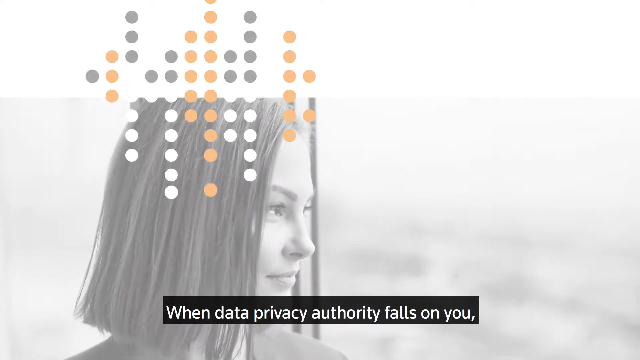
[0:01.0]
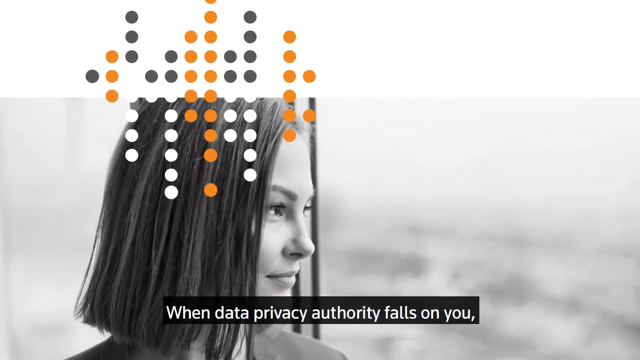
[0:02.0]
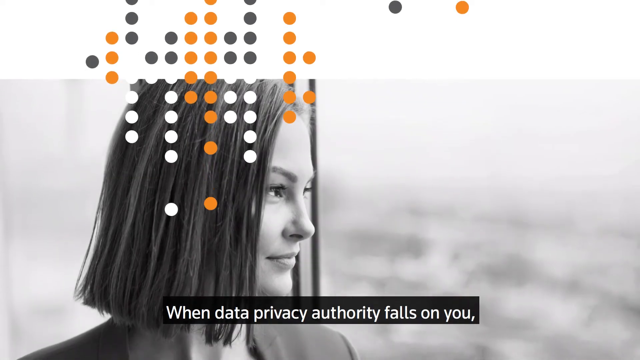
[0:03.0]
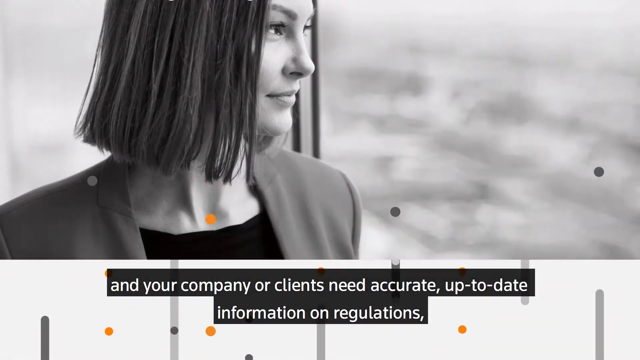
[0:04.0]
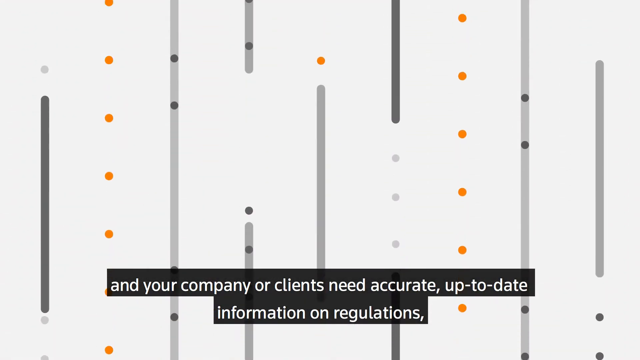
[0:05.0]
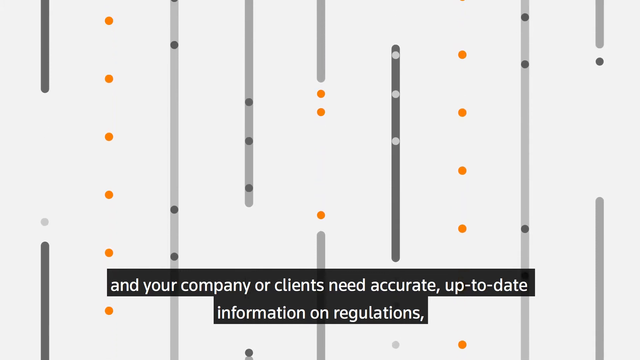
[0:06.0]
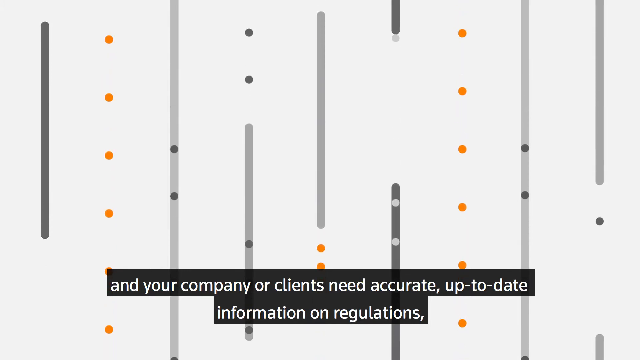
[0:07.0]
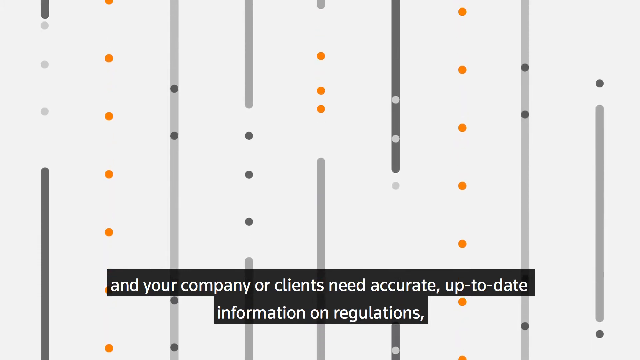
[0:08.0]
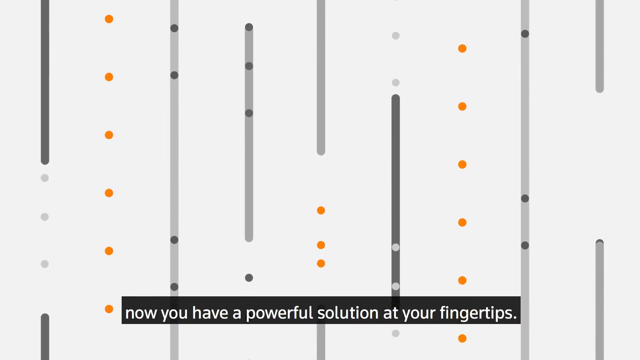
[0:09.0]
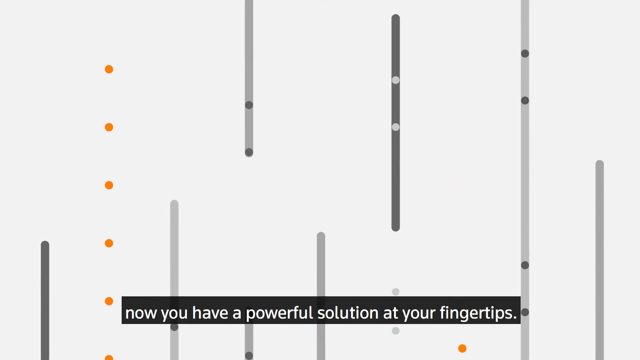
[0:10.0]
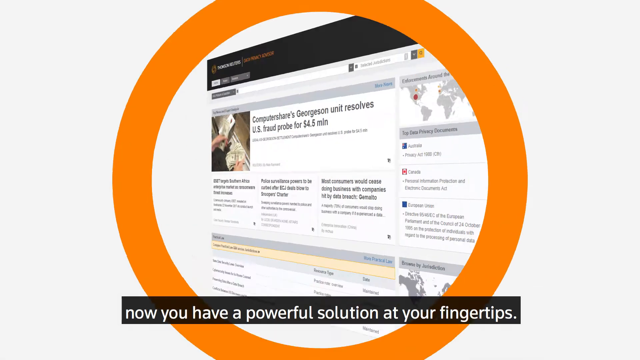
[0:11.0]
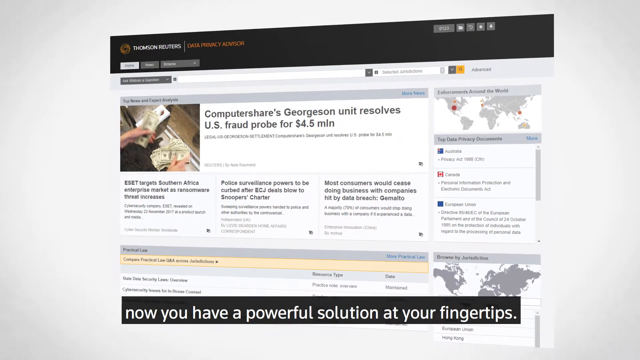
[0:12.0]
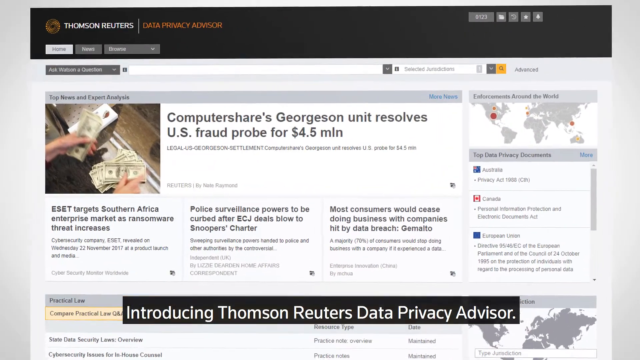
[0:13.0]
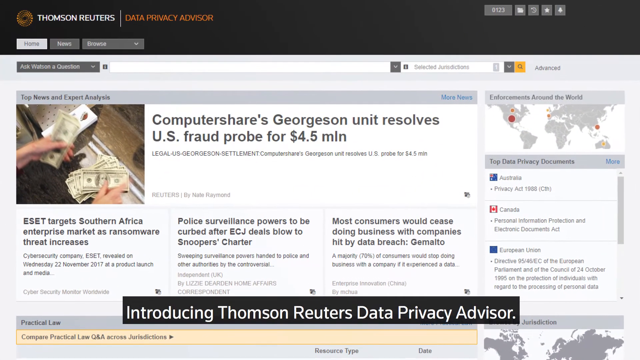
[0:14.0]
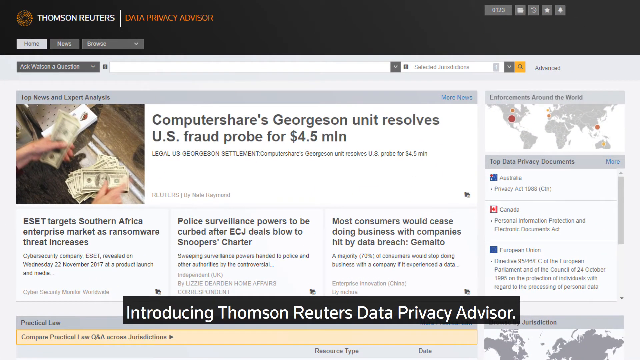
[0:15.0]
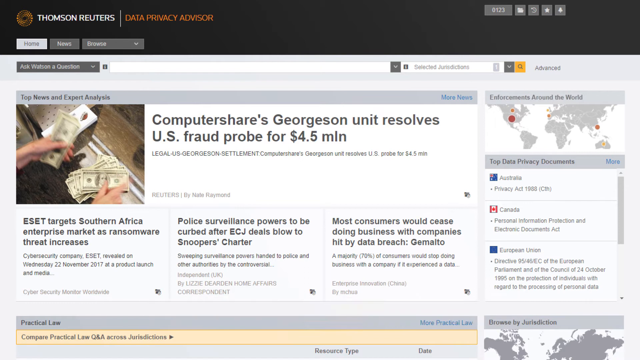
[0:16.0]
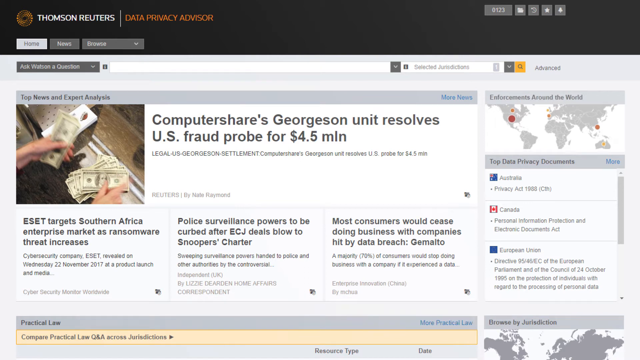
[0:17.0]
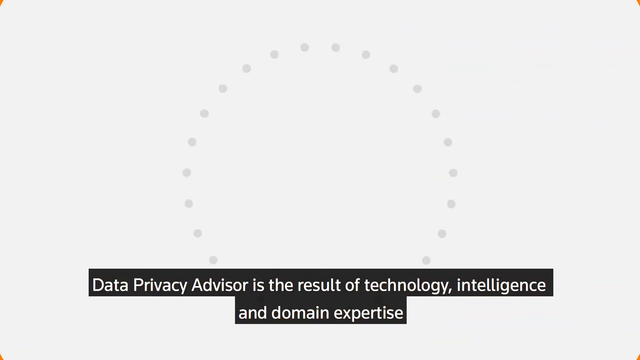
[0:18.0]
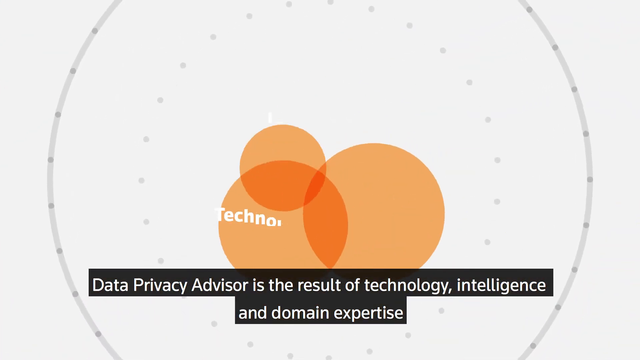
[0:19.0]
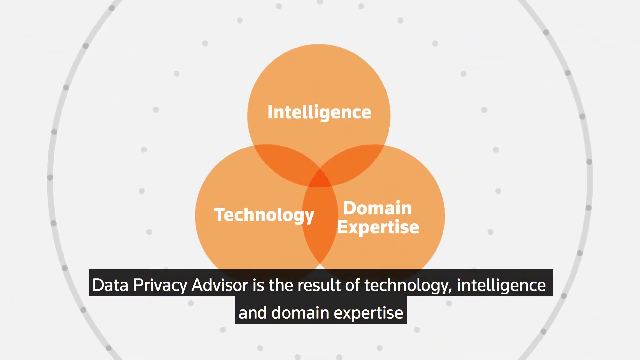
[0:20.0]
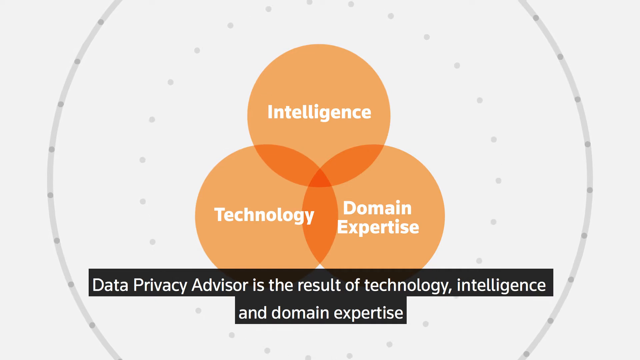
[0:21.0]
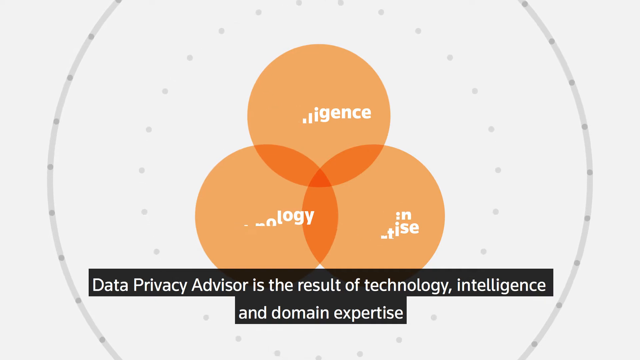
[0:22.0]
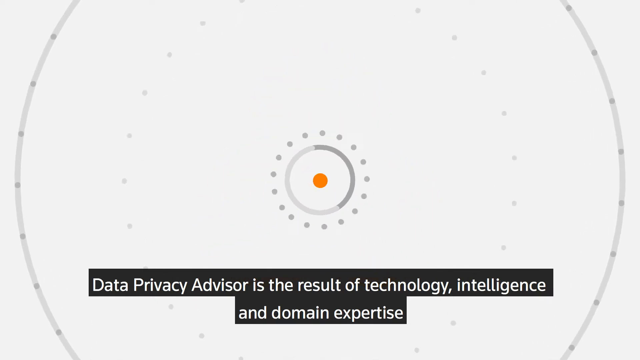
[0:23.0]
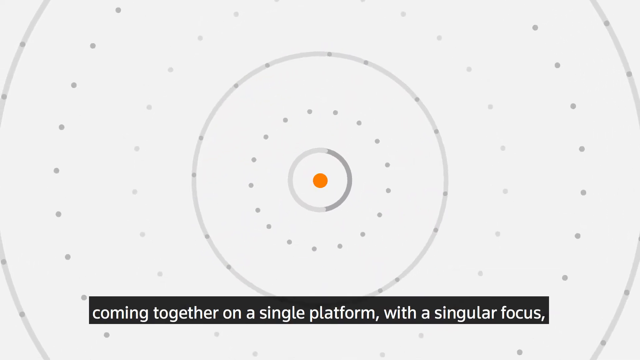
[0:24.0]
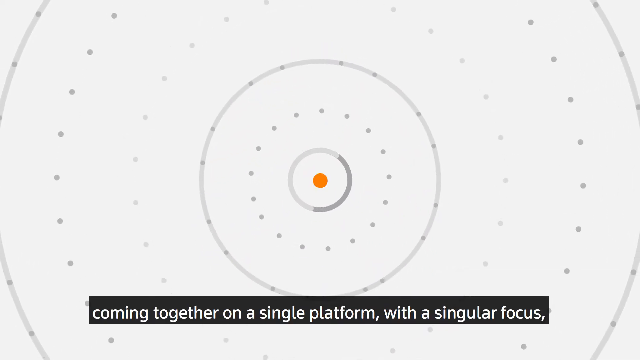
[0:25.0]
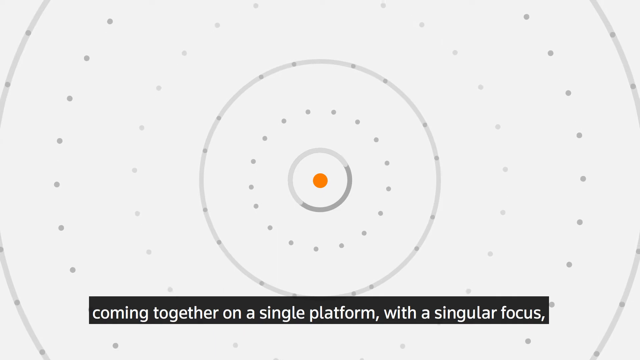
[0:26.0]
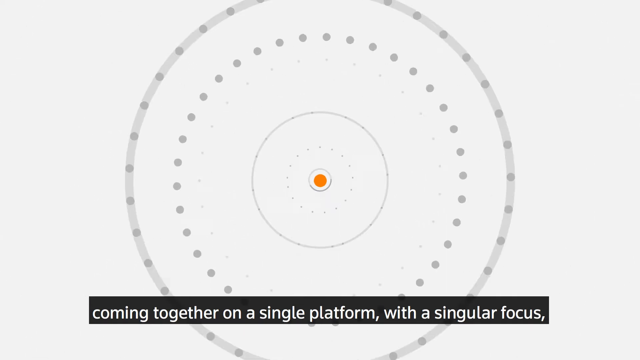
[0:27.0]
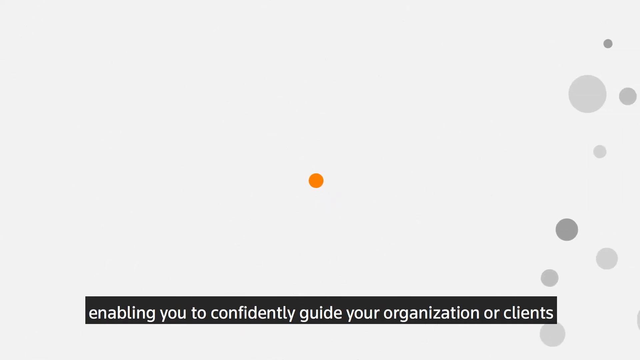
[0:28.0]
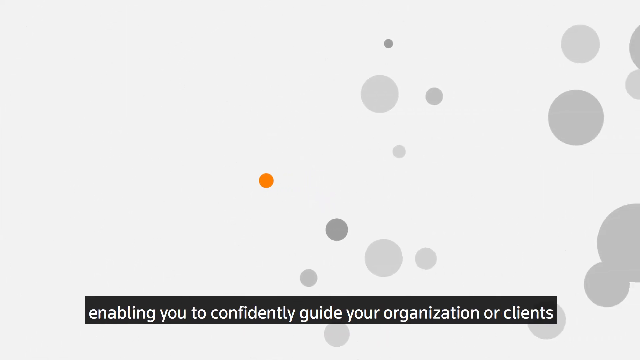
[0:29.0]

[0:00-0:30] A woman appears in the first picture with colorful dots, black, gray and orange, on her head, and subtitles are at the bottom; the text reads "when data privacy authority falls on you." The dots move down in a cascading motion, and a web page for Thompson Reuters Data Privacy Advisor appears. The page has an article whose headline begins "Computer Shares Gregersen Unit" and mentions a U.S. fraud probe for $4.5 million, along with many other articles; it seems to be a news page. Next, the video shows the relations between intelligence, technology and domain expertise and how they work together in data privacy. Then all the dots move in circles. The subtitles are easy to read.